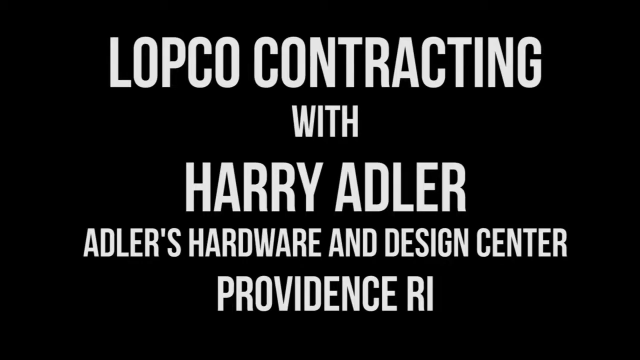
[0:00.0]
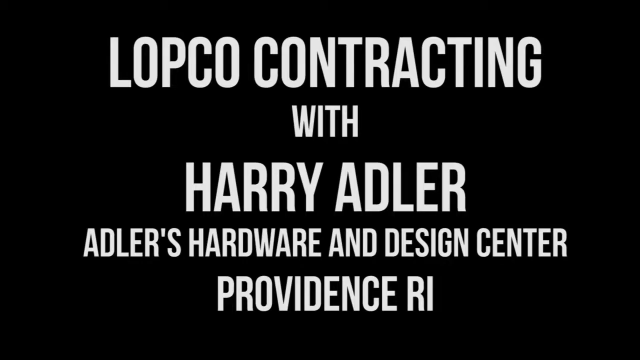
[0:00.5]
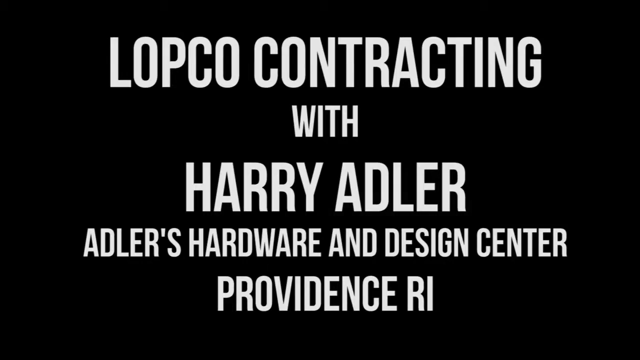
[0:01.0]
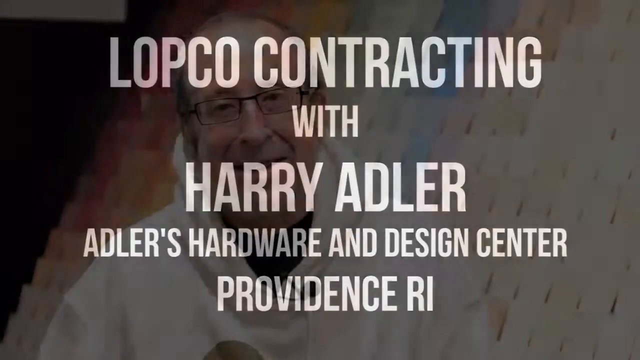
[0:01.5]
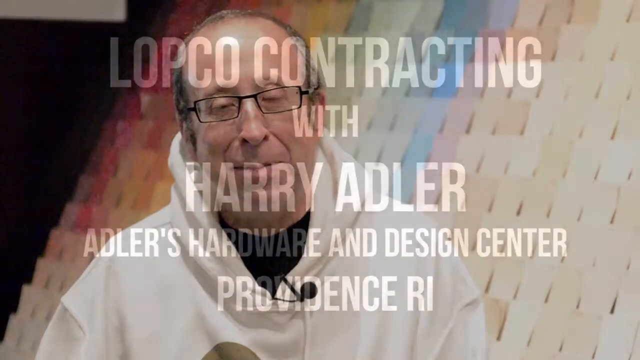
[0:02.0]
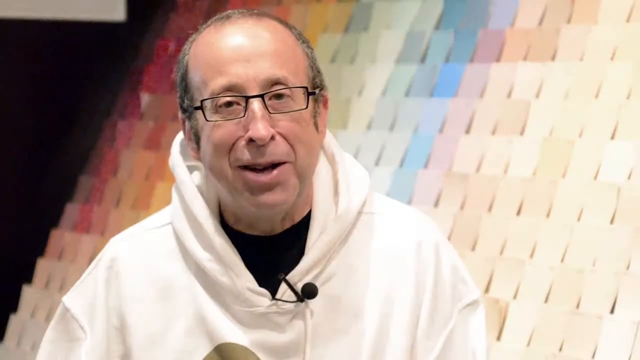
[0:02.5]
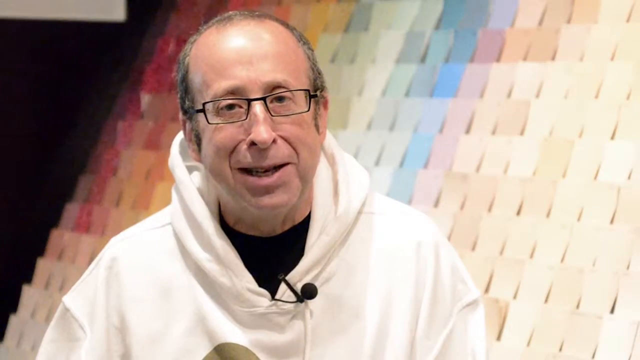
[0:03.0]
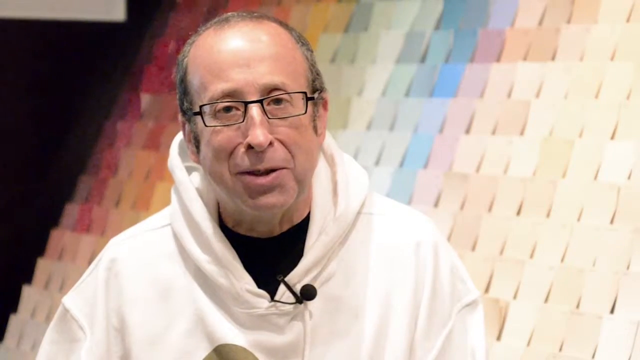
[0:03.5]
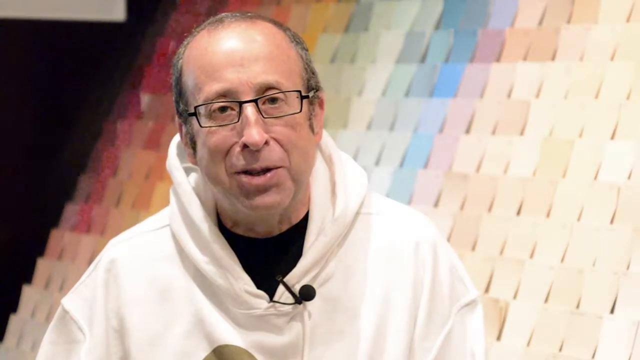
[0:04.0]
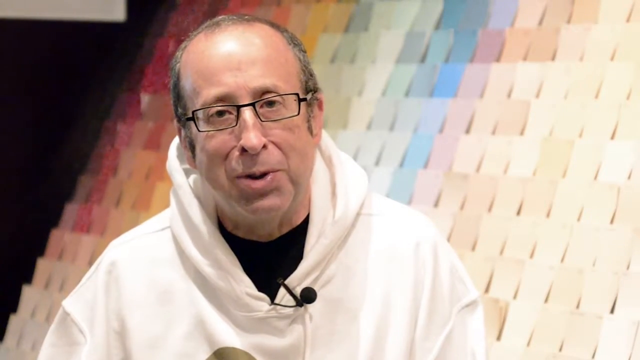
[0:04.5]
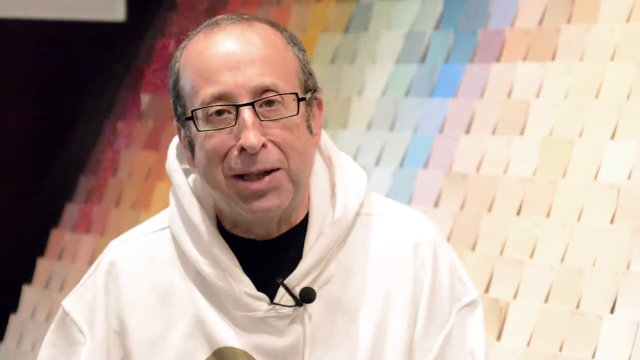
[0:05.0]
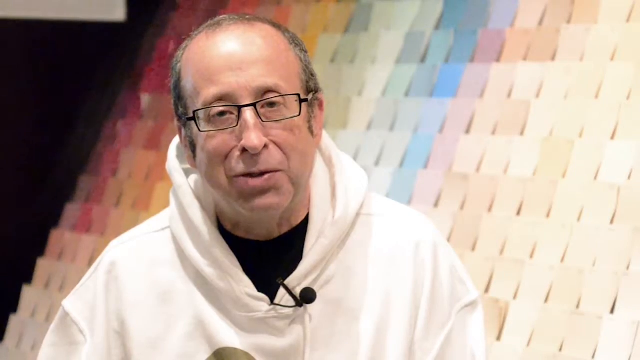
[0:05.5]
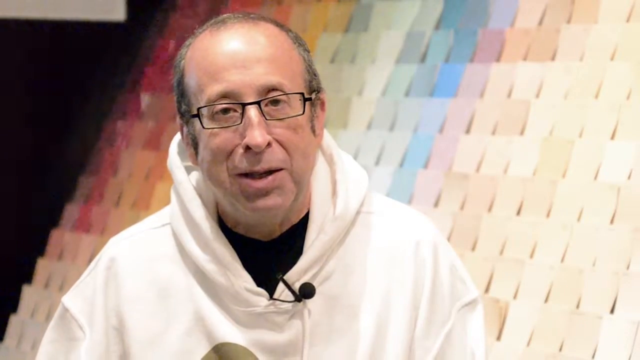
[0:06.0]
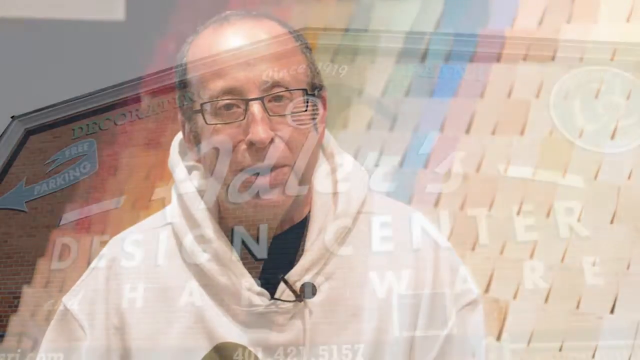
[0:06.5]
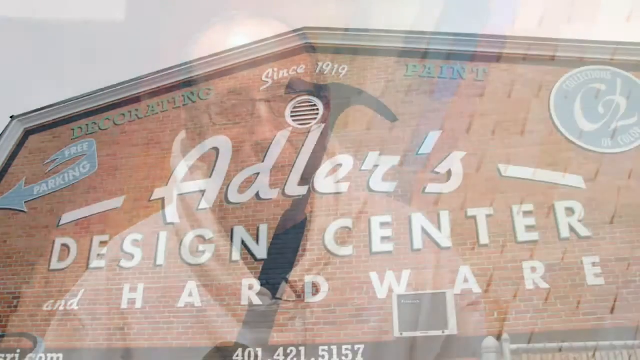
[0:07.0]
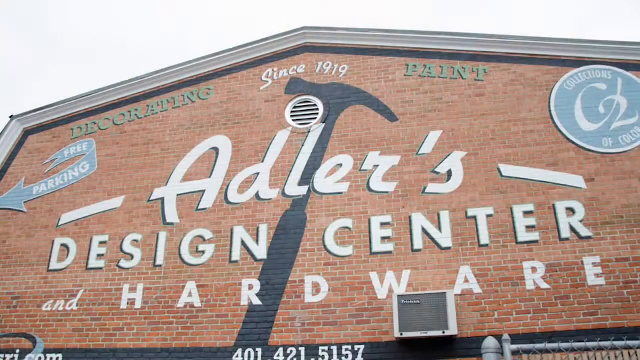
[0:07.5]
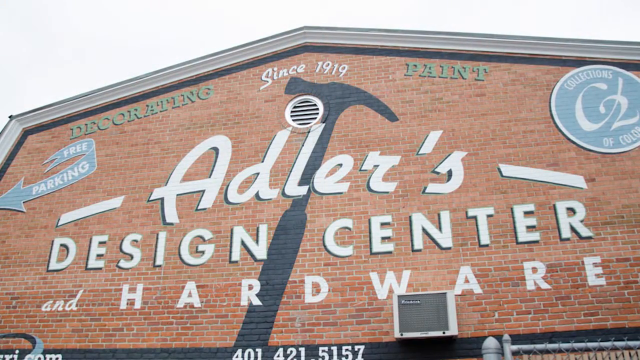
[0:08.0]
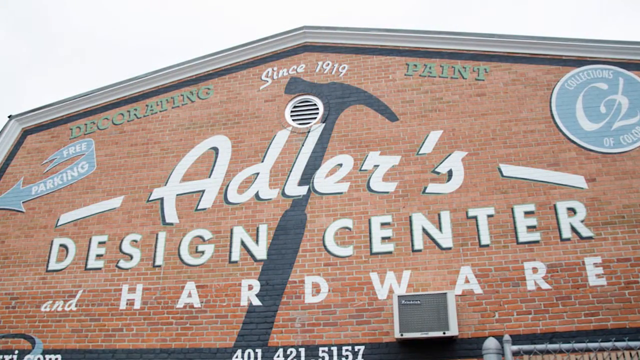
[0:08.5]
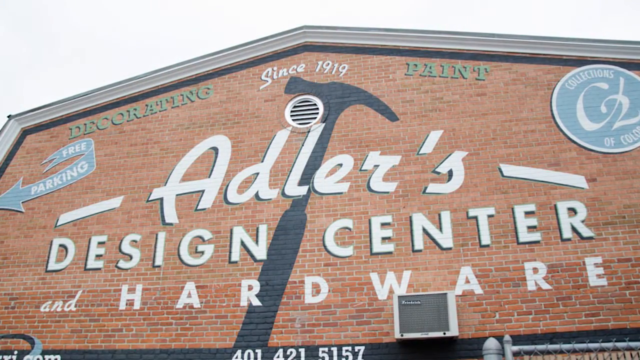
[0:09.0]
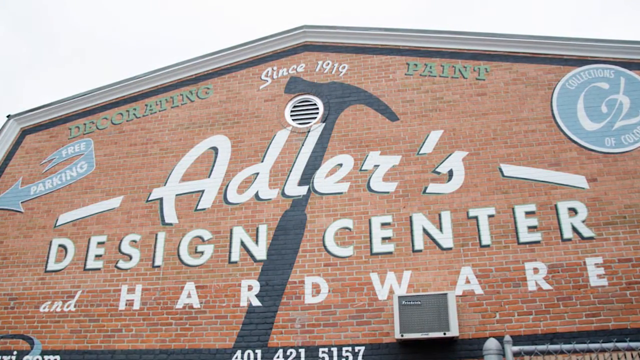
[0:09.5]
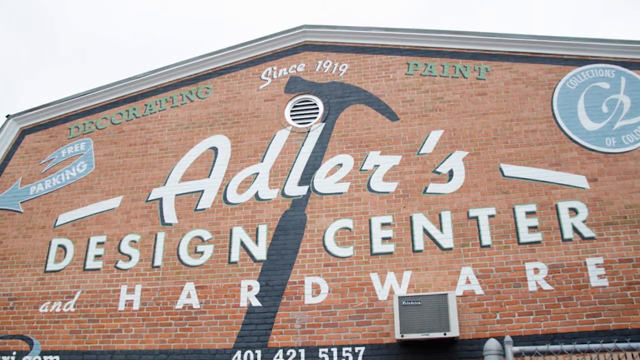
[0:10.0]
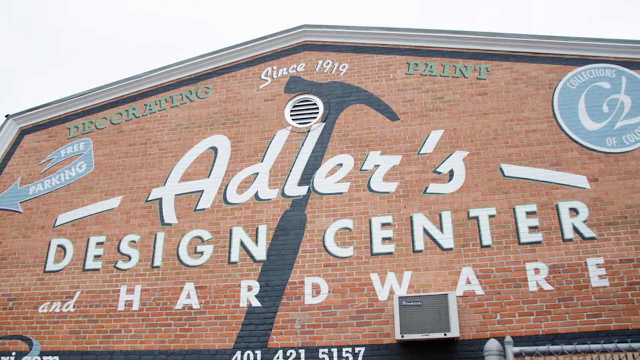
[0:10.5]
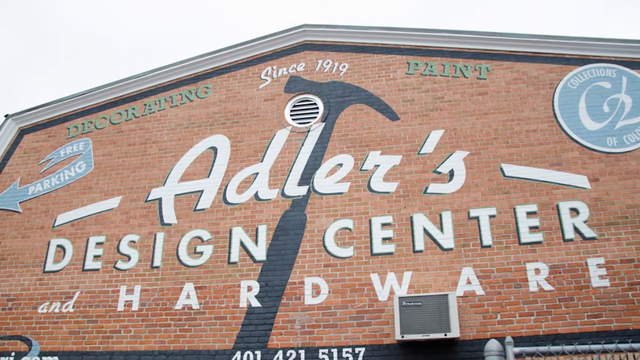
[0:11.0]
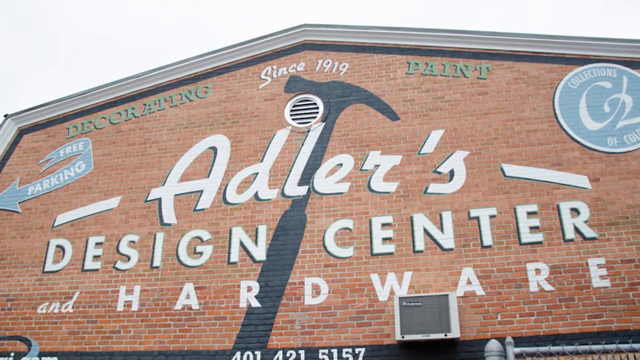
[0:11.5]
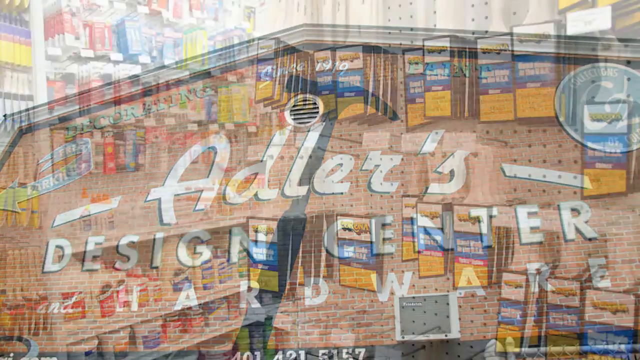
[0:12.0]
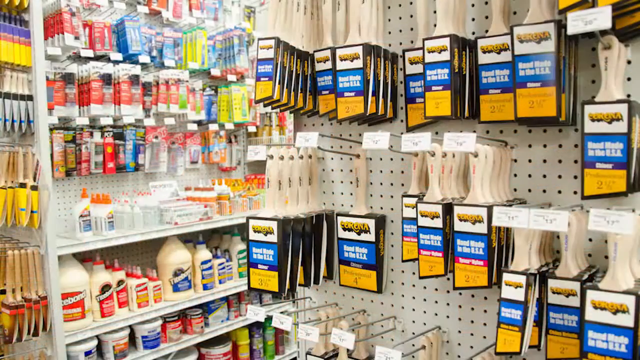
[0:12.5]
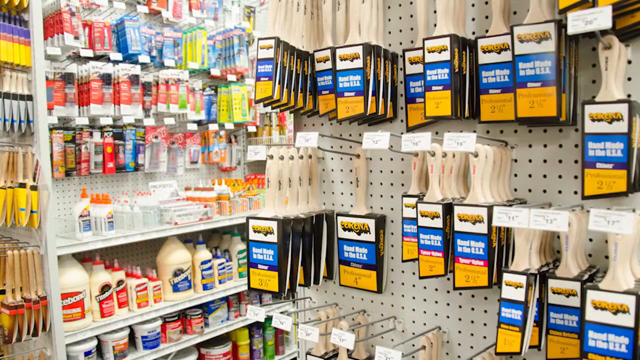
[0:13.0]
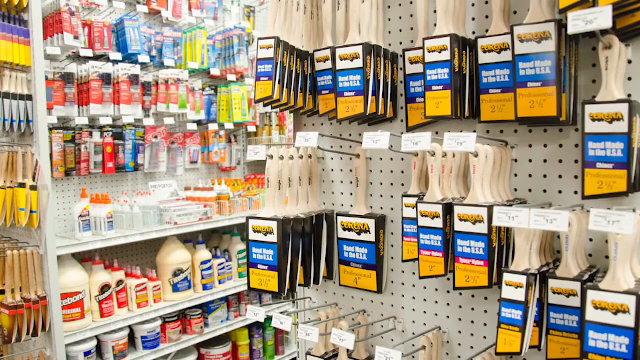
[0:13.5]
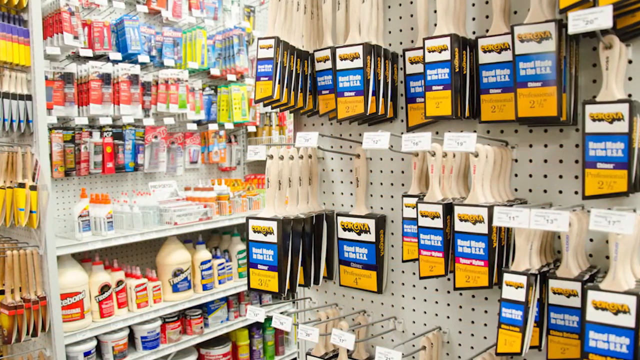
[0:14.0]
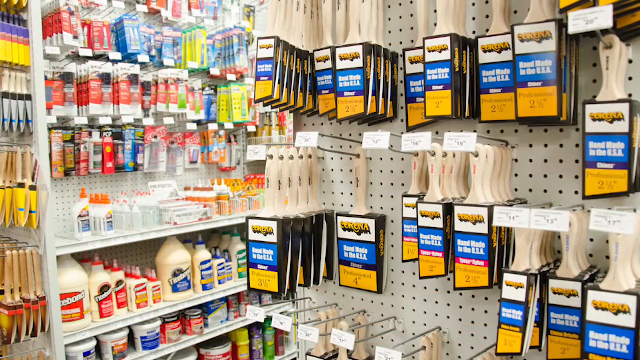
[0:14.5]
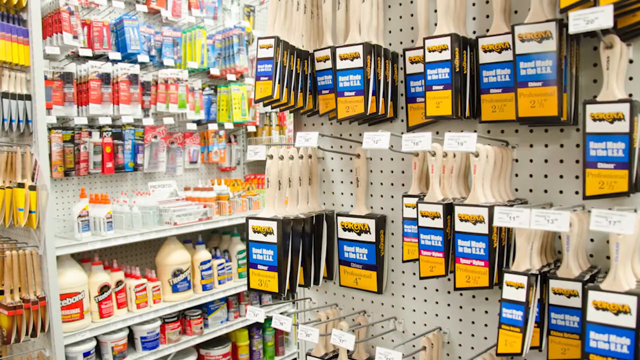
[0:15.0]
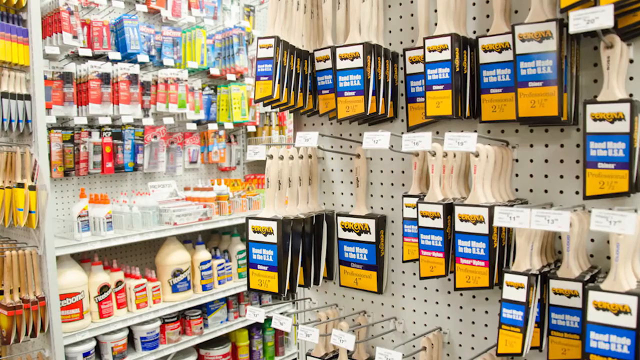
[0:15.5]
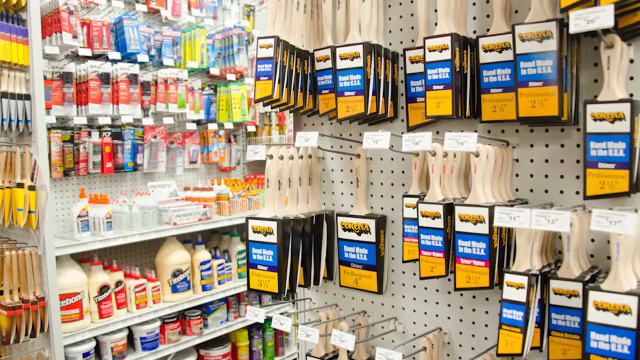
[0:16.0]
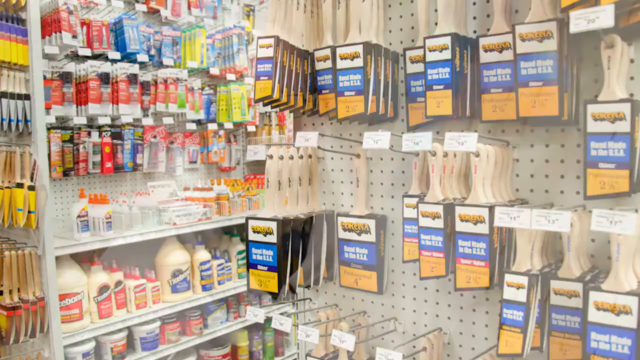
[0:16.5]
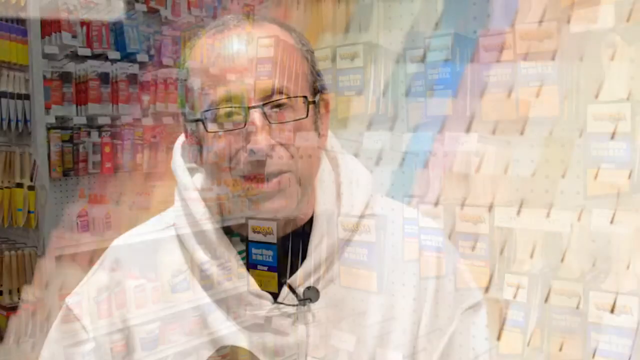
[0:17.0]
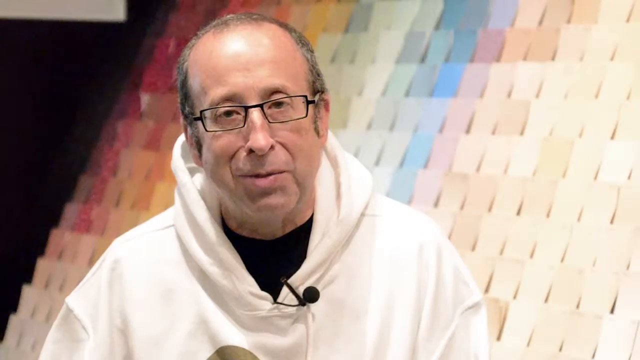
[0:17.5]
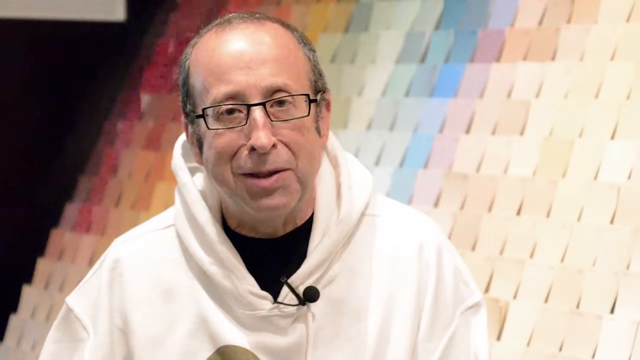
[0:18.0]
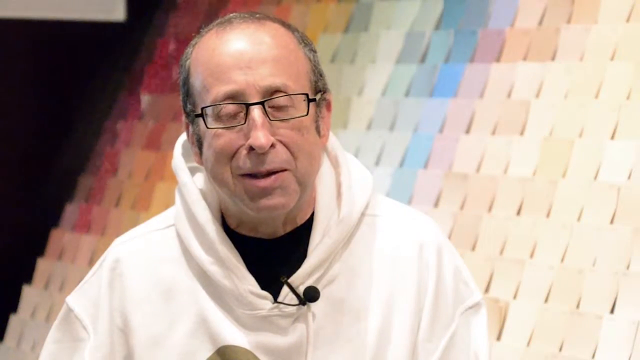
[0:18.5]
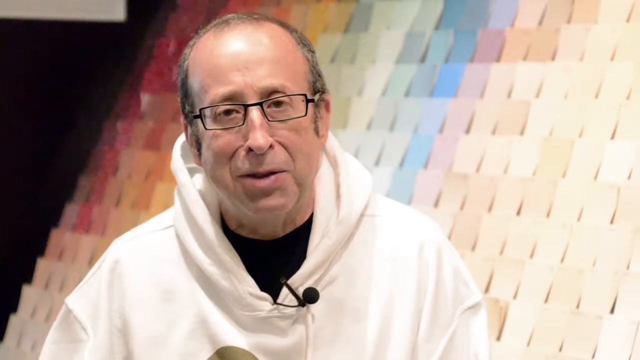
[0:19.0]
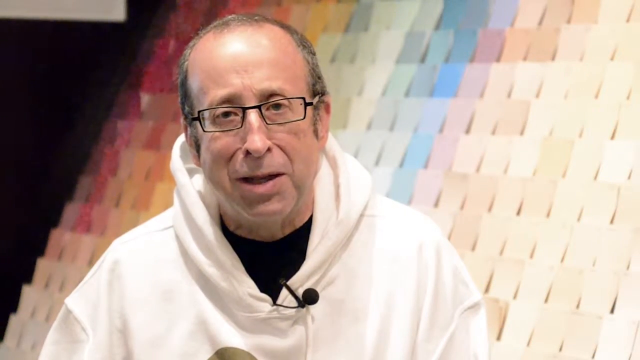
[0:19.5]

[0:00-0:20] The video opens on a page for LOPCO CONTRACTING SERVICES, Adler's Hardware and Design Center. A white man in his fifties, wearing spectacles and a white hood with a black t-shirt visible at the front underneath, talks to the camera and has a recorder. The background behind him is very colourful, with placards in cream and blue, and pink ones to the far left. Inside the shop, different kinds of items are for sale: some in blue containers, some in orange containers and some in pink tubes. Glue is also visible.